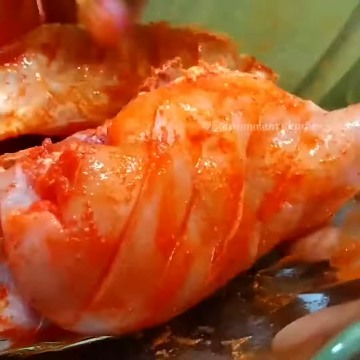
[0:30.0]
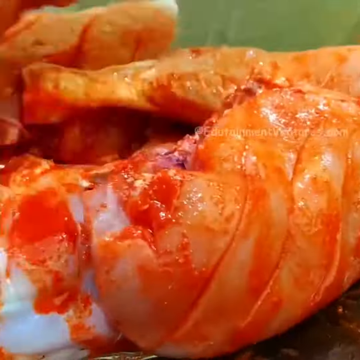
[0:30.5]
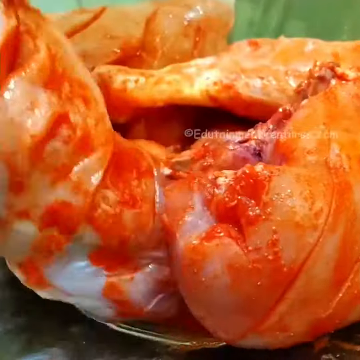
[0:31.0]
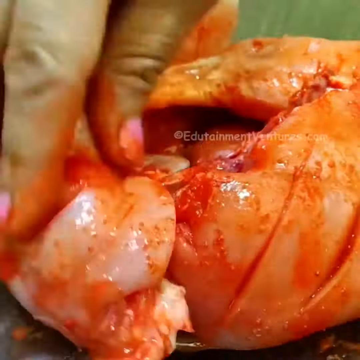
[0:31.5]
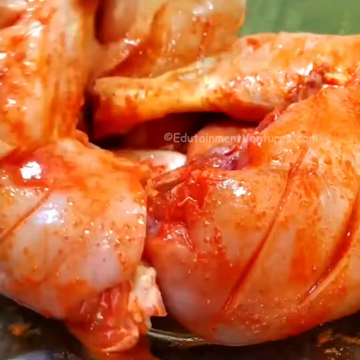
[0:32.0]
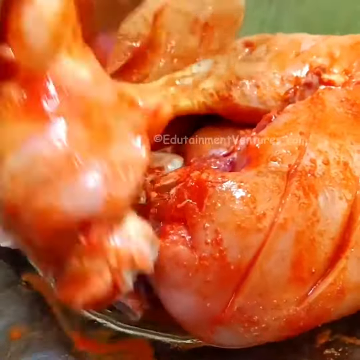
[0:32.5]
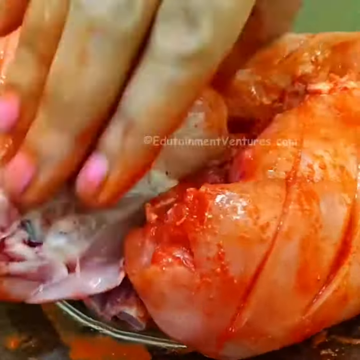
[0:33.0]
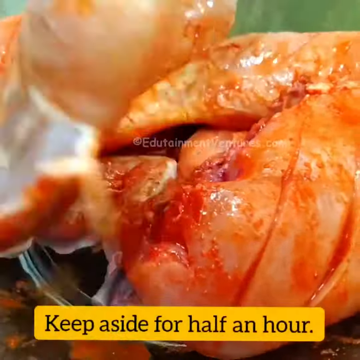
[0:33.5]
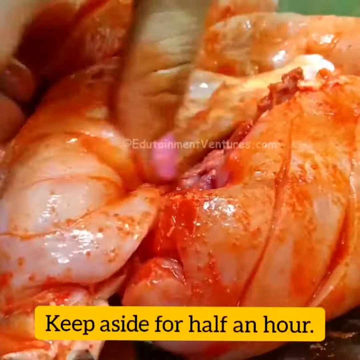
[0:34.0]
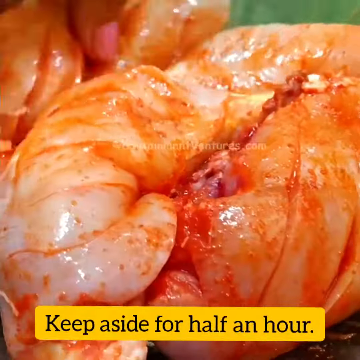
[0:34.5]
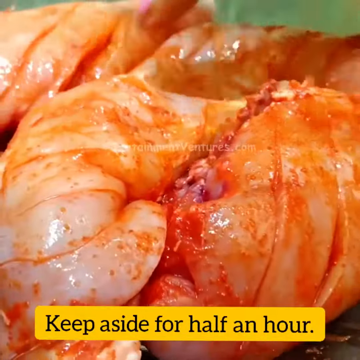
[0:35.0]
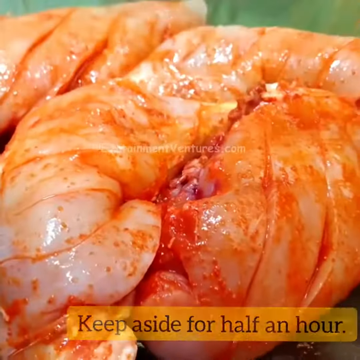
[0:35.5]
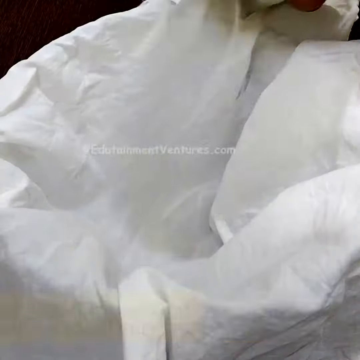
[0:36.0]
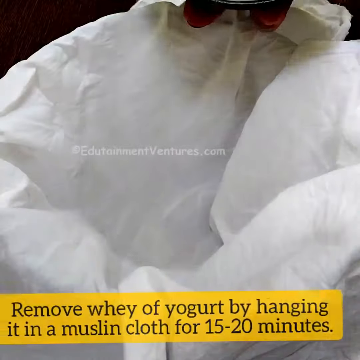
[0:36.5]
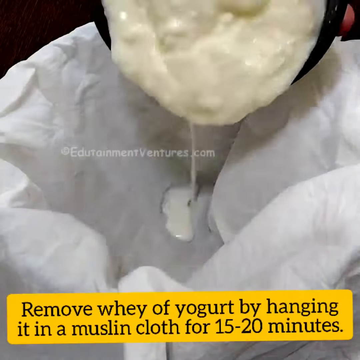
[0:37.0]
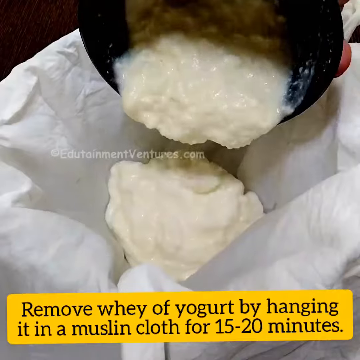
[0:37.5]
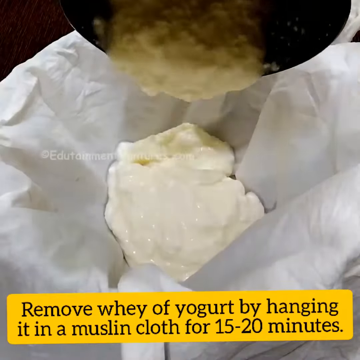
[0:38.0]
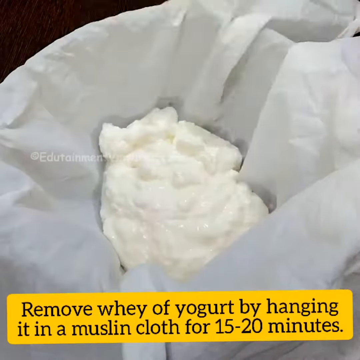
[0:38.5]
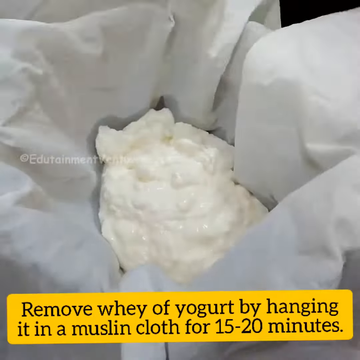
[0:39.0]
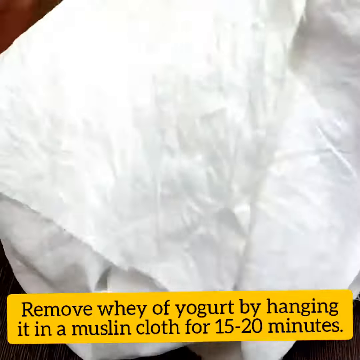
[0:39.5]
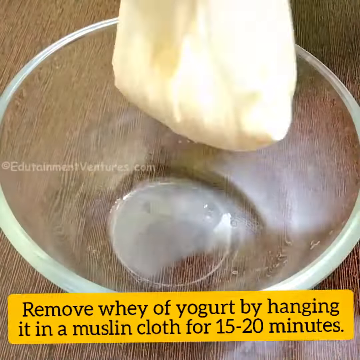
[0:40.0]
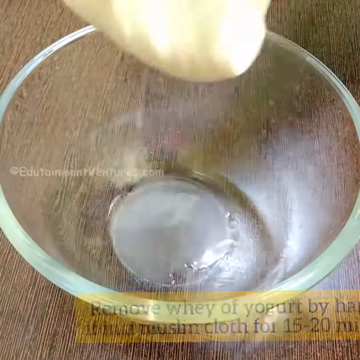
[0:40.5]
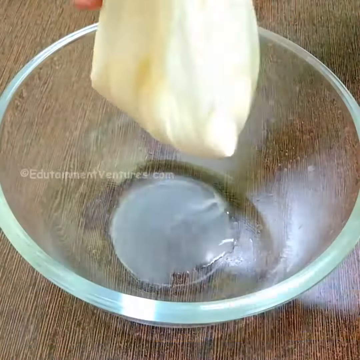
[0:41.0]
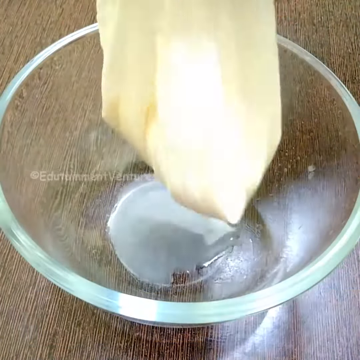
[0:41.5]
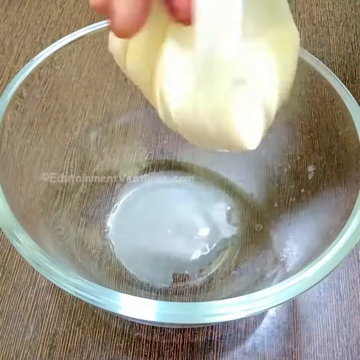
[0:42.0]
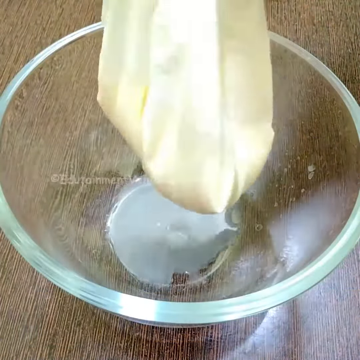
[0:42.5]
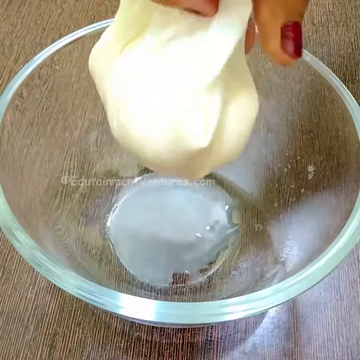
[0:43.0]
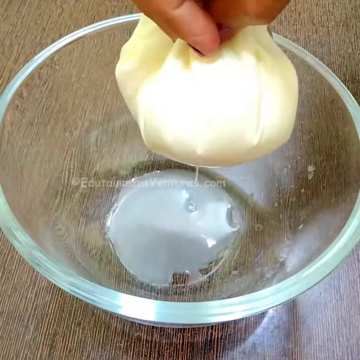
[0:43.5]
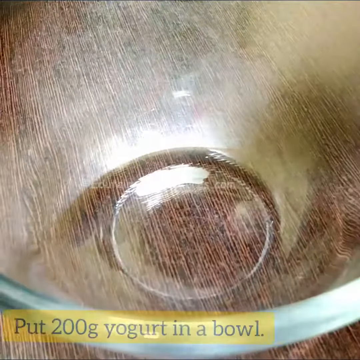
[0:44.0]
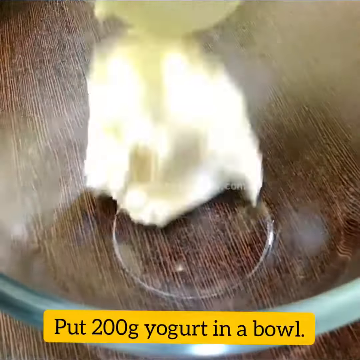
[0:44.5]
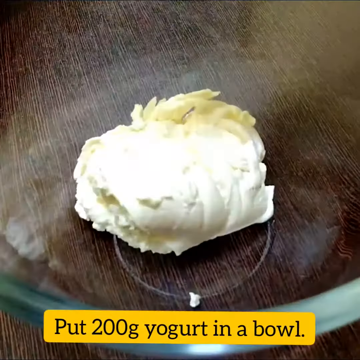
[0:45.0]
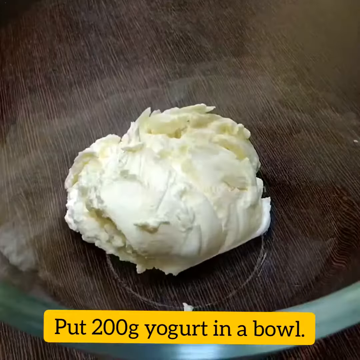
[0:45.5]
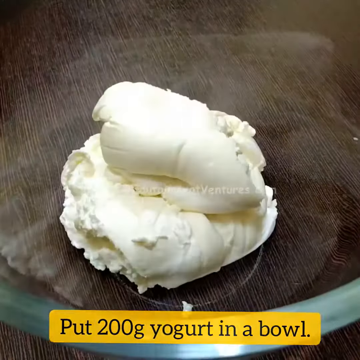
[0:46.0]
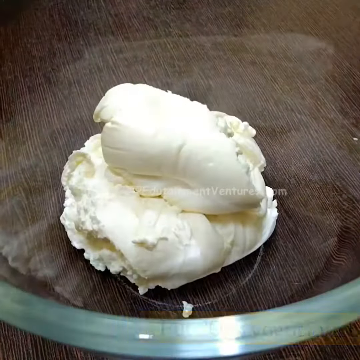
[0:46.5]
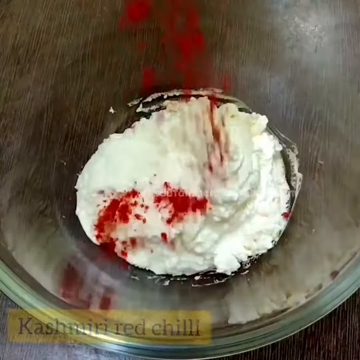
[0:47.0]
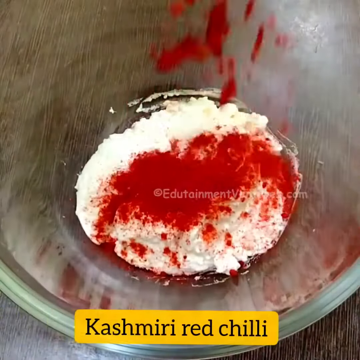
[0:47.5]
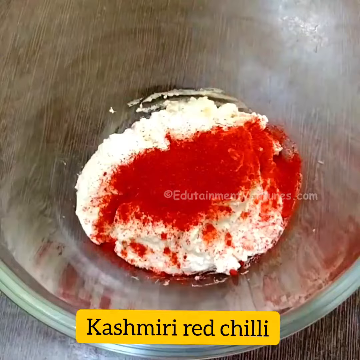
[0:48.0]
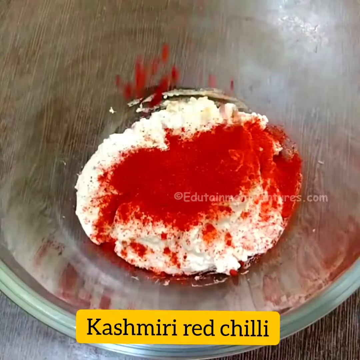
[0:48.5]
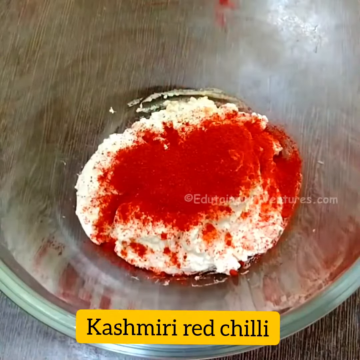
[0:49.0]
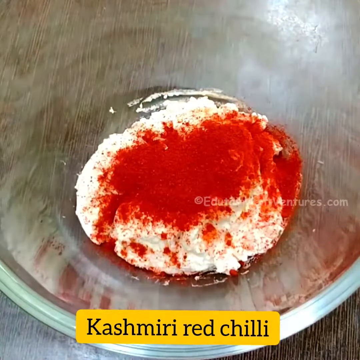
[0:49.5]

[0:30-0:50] The marinade continues to be rubbed into the chicken. It is orange with some red parts, looks quite spicy, and is a viscous thin liquid. It is rubbed all over both sides of the chicken, and the text at the bottom reads "keep aside for half an hour". Next, someone empties a tin of what is apparently yogurt into a muslin cloth, with text at the bottom reading "remove whey of yogurt by hanging in a muslin cloth for 15 to 20 minutes". The yogurt is poured into the muslin cloth, which is suspended above a bowl and squeezed gently to get the liquid out. Then 200 grams of the yogurt is put into a bowl on its own; it is very white and drier looking than before. Kashmiri red chili, a very bright red substance that is striking against the white yogurt, is added on top.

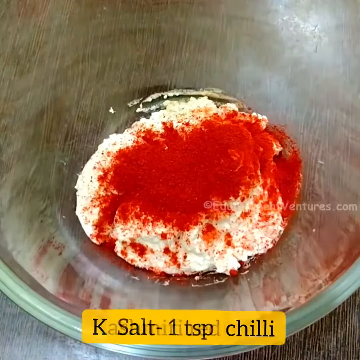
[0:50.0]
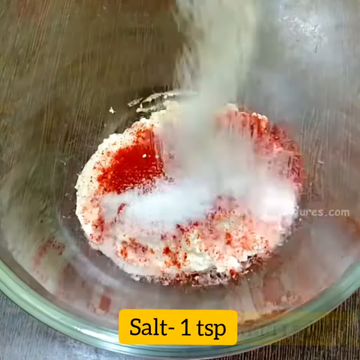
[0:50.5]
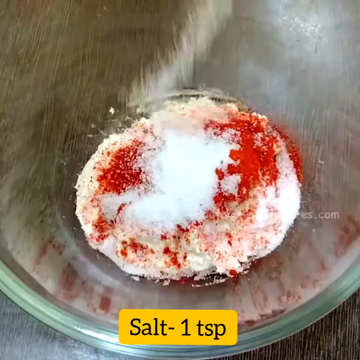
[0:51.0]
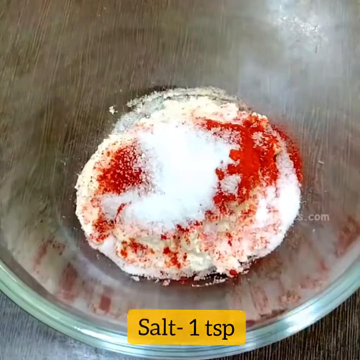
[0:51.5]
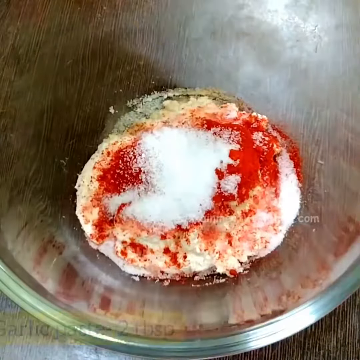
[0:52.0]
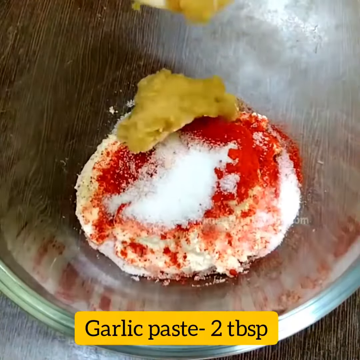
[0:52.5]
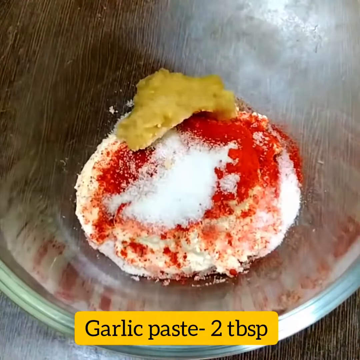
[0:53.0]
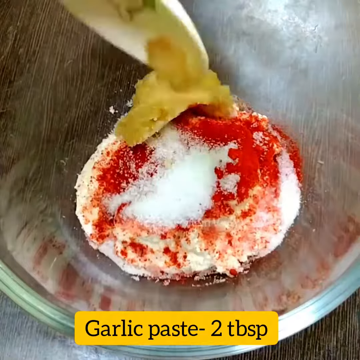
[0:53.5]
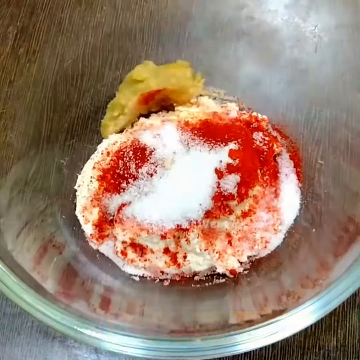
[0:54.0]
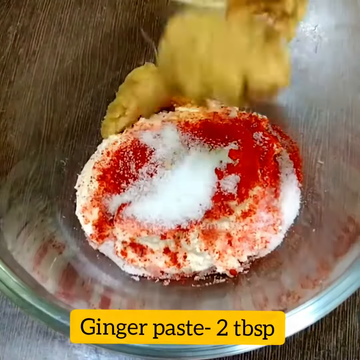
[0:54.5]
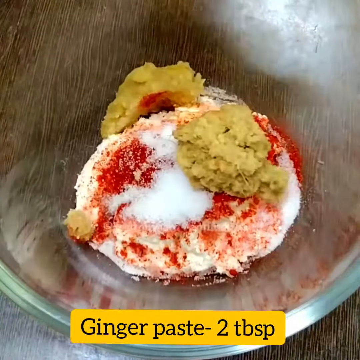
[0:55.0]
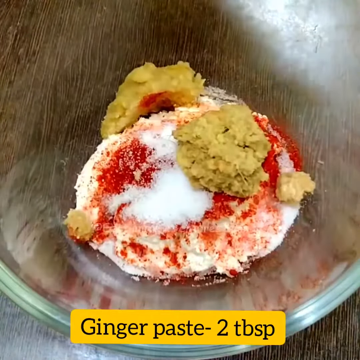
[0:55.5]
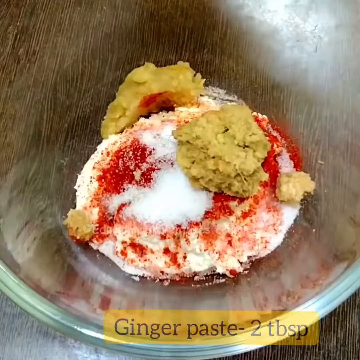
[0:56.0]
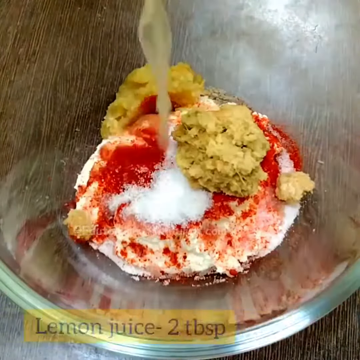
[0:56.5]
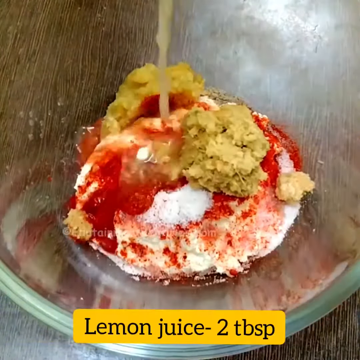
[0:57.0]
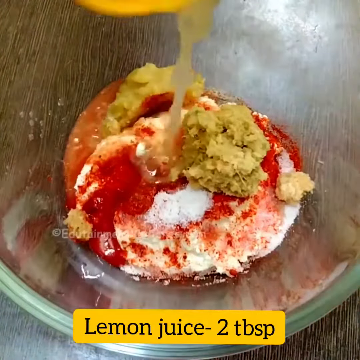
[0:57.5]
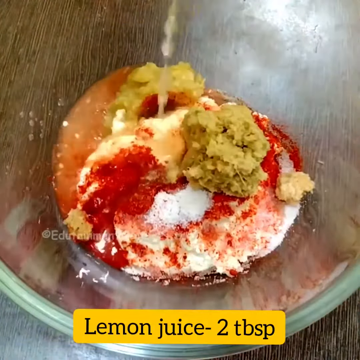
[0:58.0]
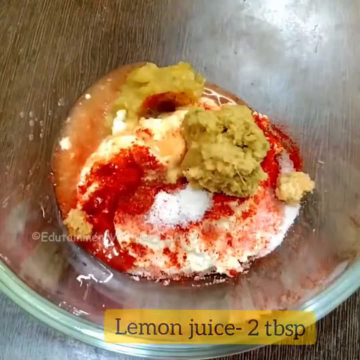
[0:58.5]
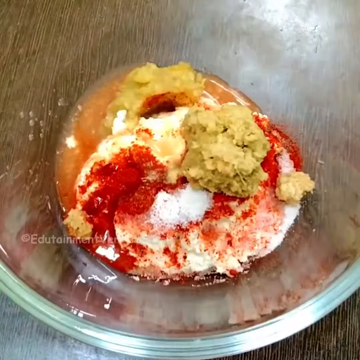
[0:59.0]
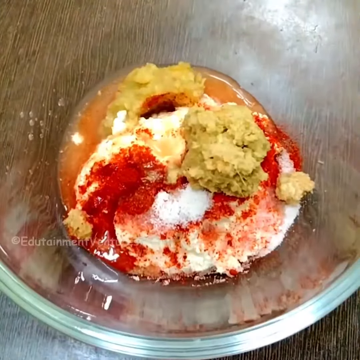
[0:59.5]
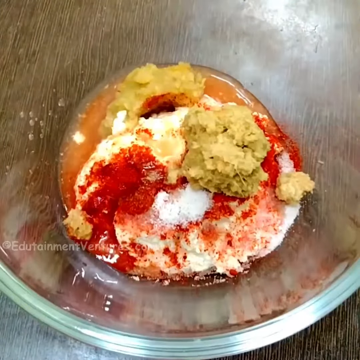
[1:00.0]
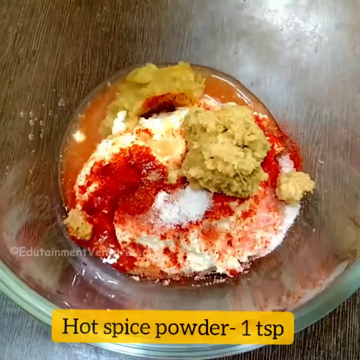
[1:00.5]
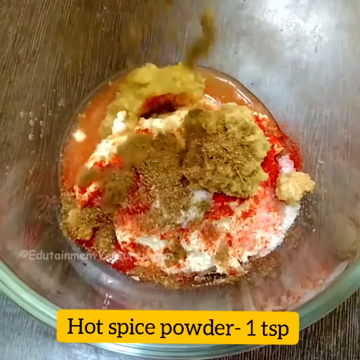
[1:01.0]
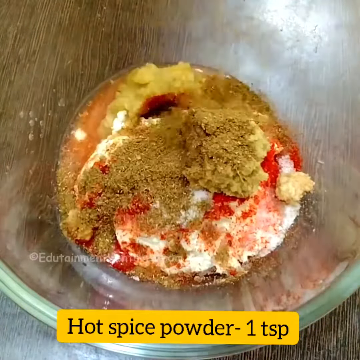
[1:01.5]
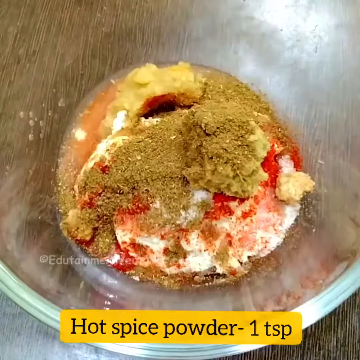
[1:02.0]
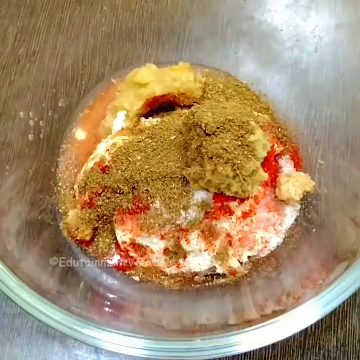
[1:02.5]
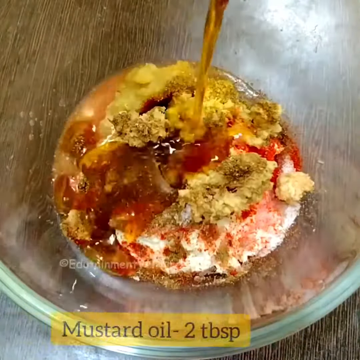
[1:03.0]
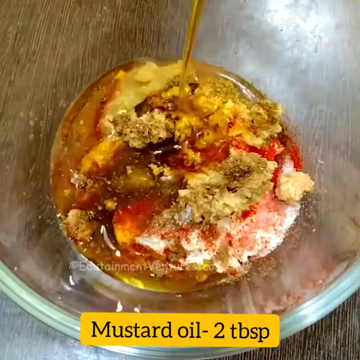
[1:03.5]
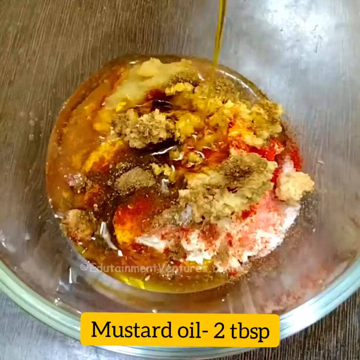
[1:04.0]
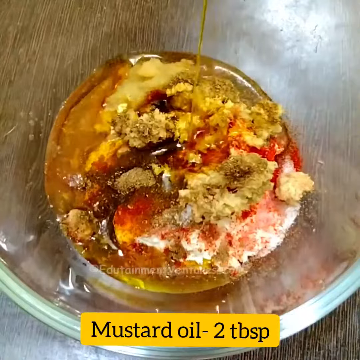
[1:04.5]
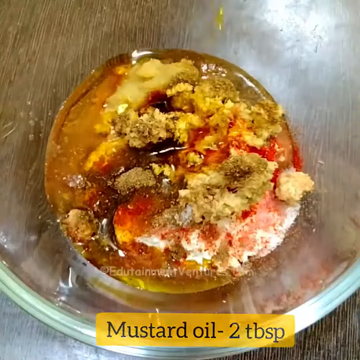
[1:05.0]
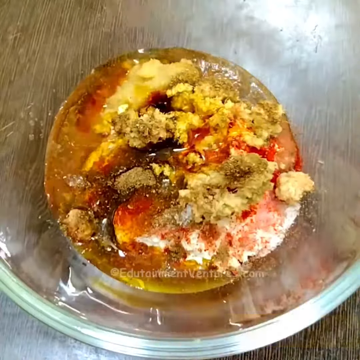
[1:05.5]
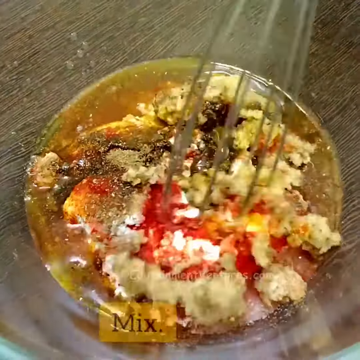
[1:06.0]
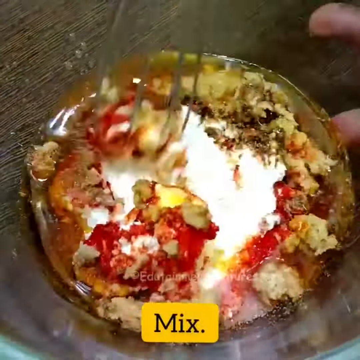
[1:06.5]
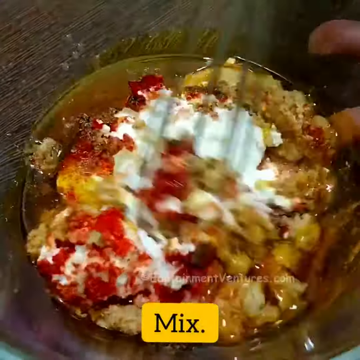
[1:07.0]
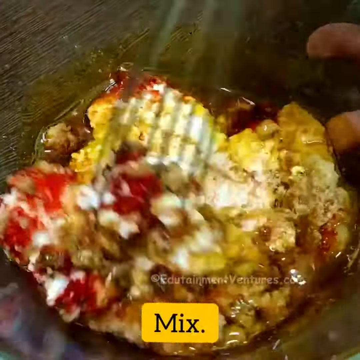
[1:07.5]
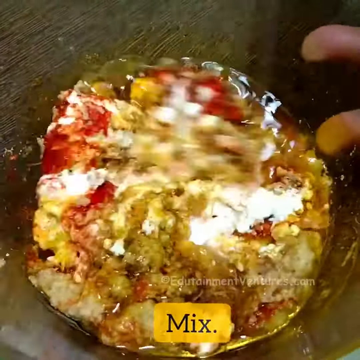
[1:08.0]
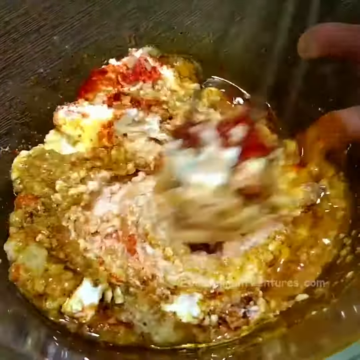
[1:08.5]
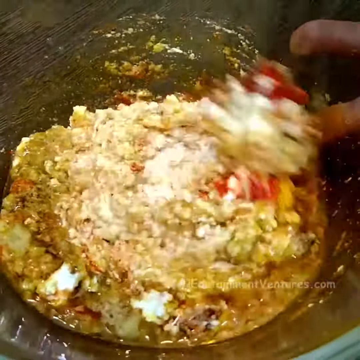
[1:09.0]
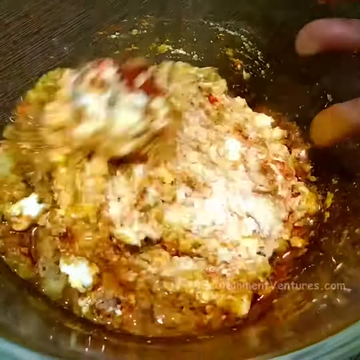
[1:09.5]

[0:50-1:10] What looks like the marinade for the chicken is prepared, starting with the bowl of yogurt topped with the striking red Kashmiri chili. Text at the bottom reads "salt, one teaspoon", and someone drops salt into the bowl. Next the text reads "garlic paste, two tablespoons", and two scoops of garlic paste are dropped into the mixture. Then "lemon juice" appears with "two tablespoons" at the bottom, and the lemon juice is poured in; it settles around the top of the yogurt, sort of translucent, mixing with the red of the Kashmiri chili. Next the text reads "hot spice powder", one teaspoon, and someone drops it on top. Then "mustard oil, two tablespoons" appears at the bottom and mustard oil is poured on top, adding to the liquid already in the bowl. The text then says "mix", and the person mixes everything in the bowl with a whisk; the colours meld together, giving the mixture a slightly green tinge.